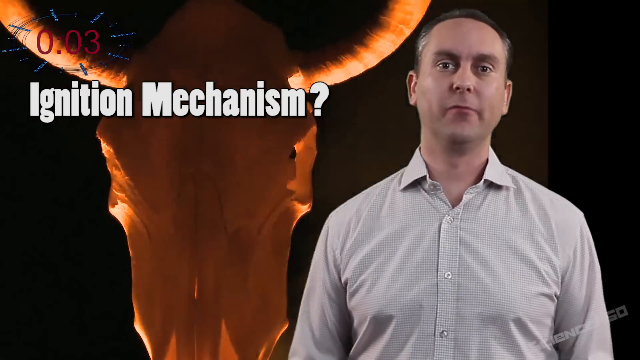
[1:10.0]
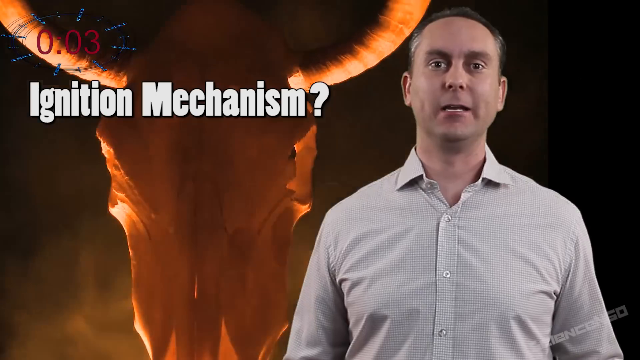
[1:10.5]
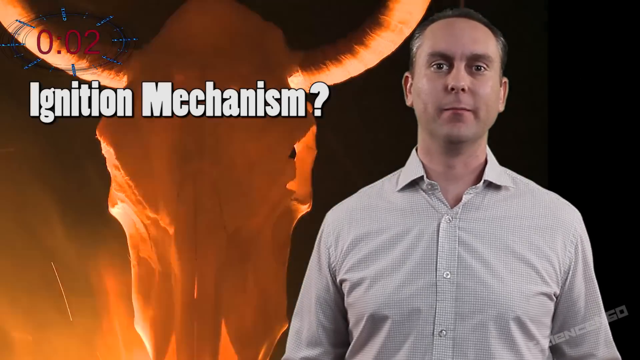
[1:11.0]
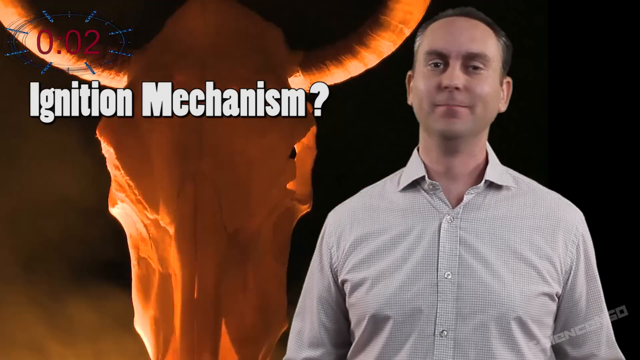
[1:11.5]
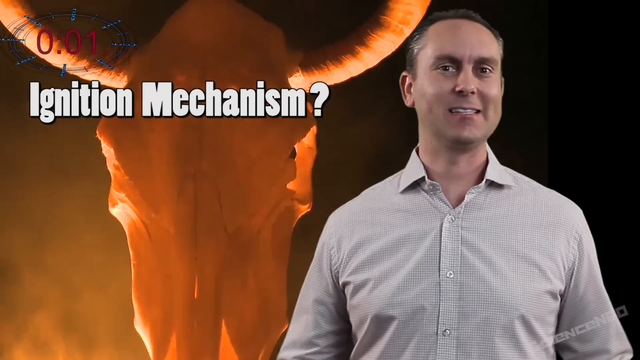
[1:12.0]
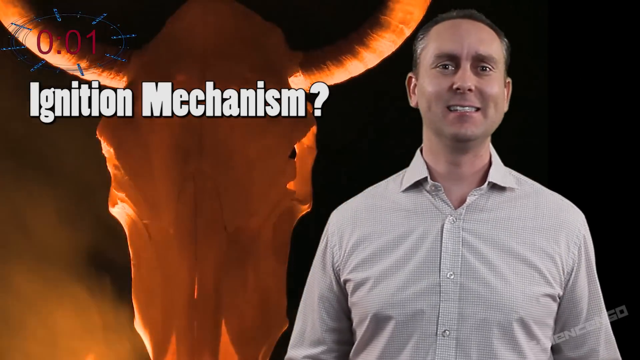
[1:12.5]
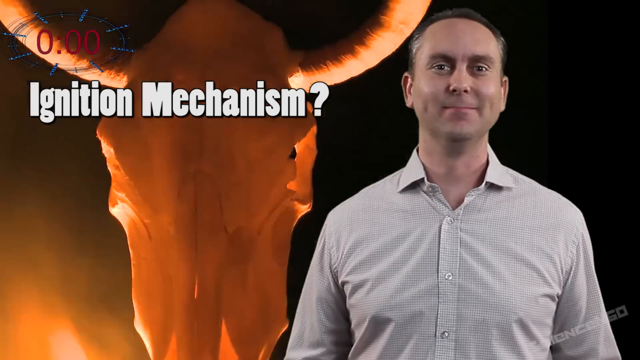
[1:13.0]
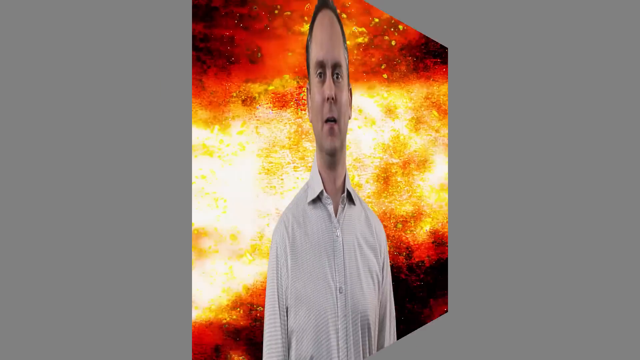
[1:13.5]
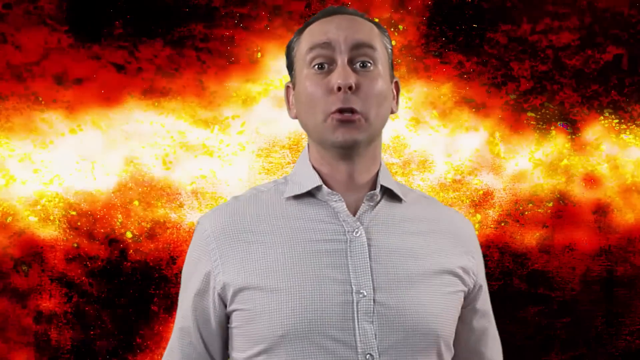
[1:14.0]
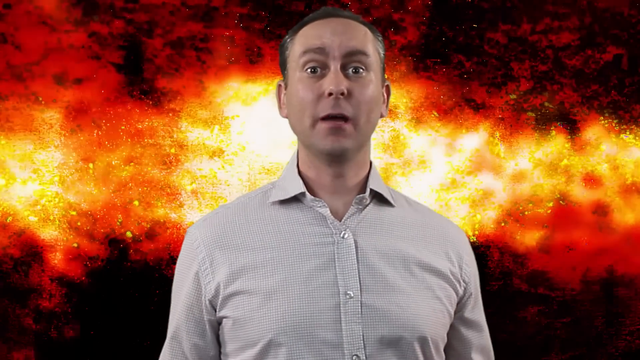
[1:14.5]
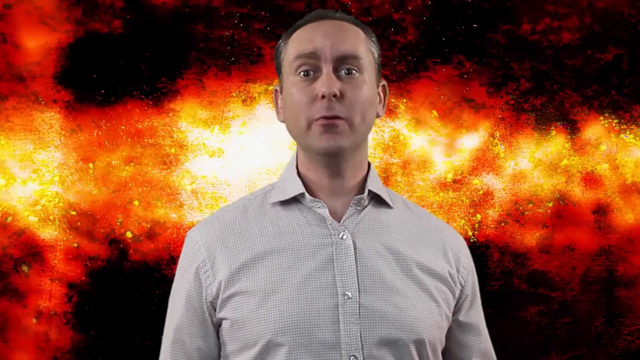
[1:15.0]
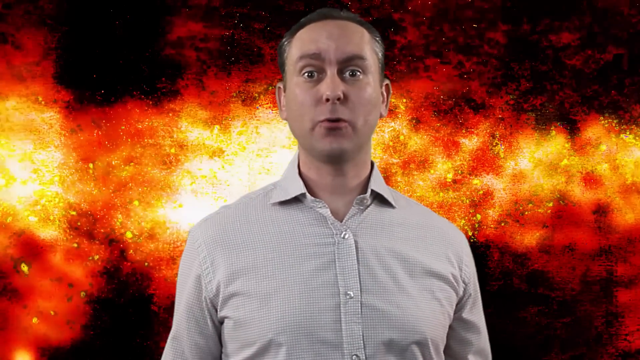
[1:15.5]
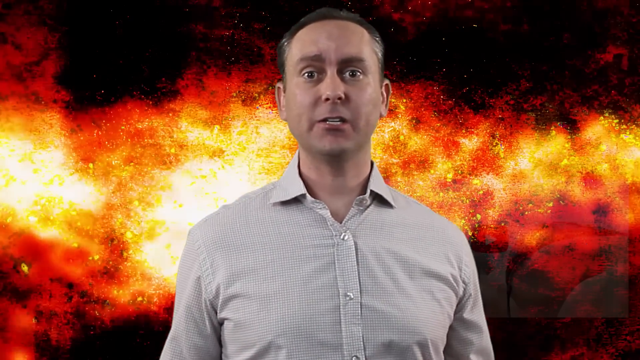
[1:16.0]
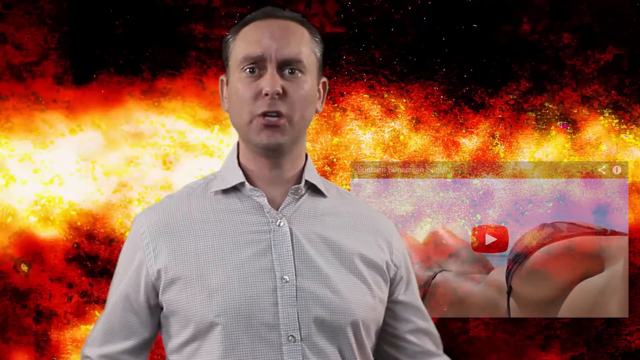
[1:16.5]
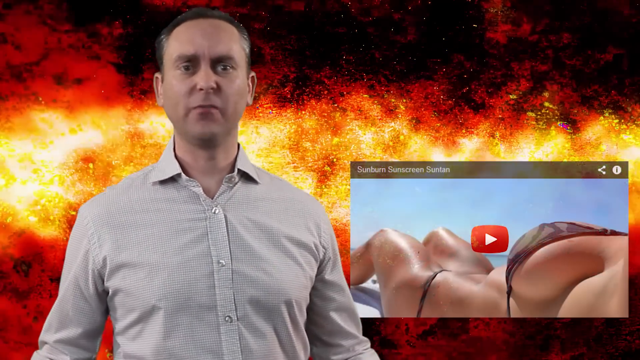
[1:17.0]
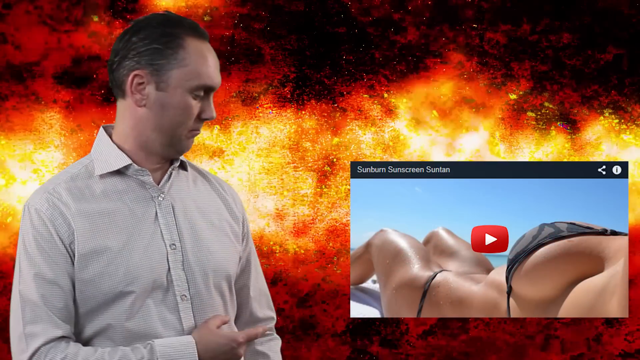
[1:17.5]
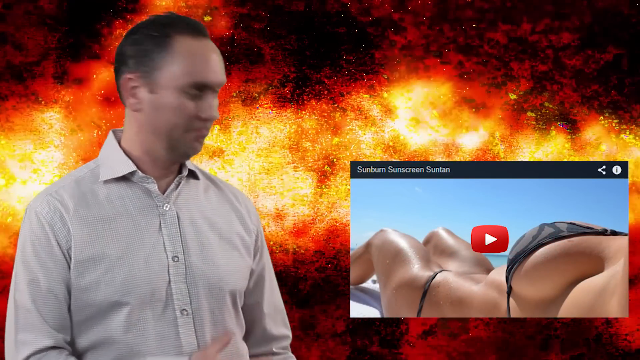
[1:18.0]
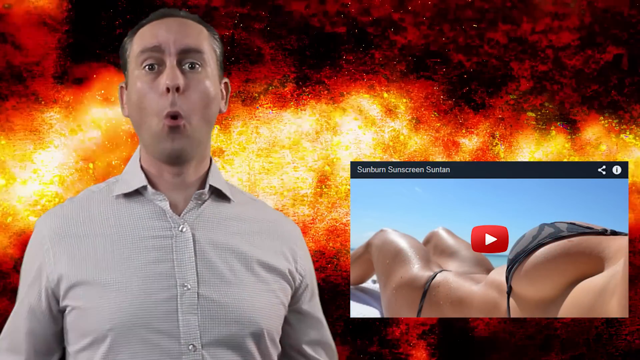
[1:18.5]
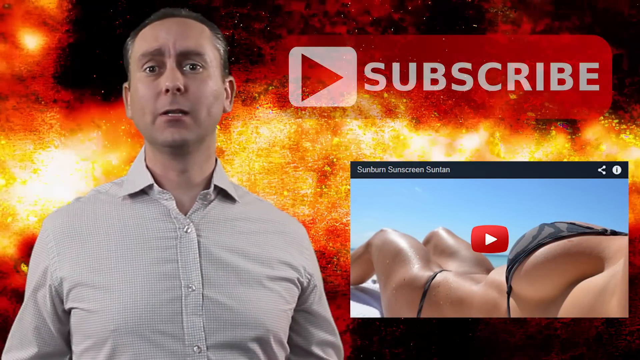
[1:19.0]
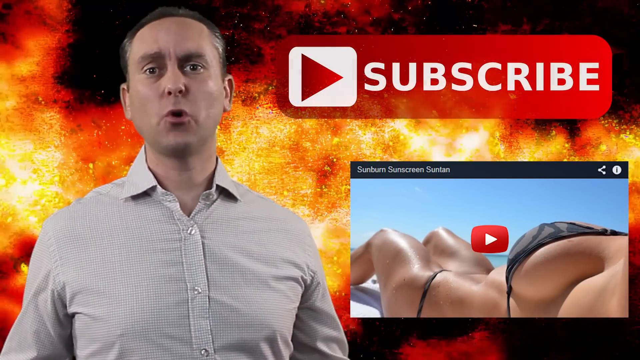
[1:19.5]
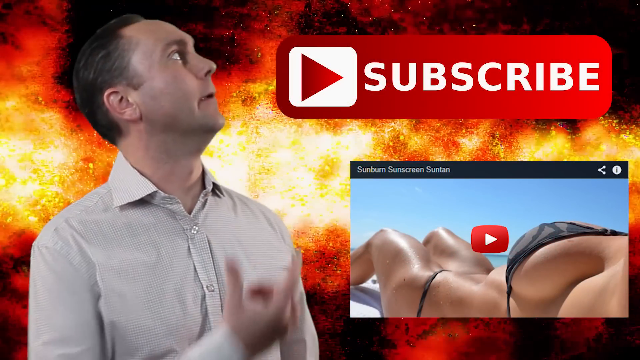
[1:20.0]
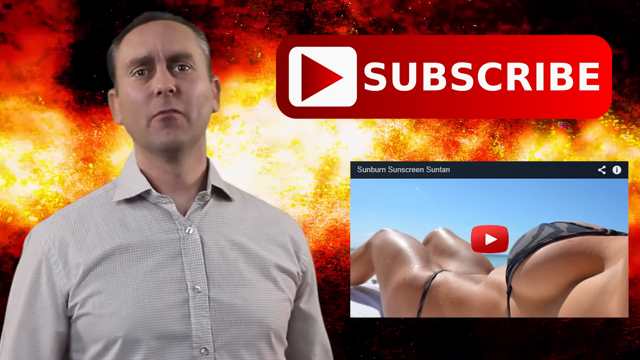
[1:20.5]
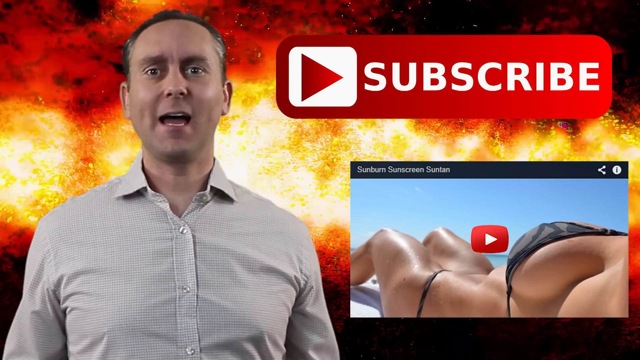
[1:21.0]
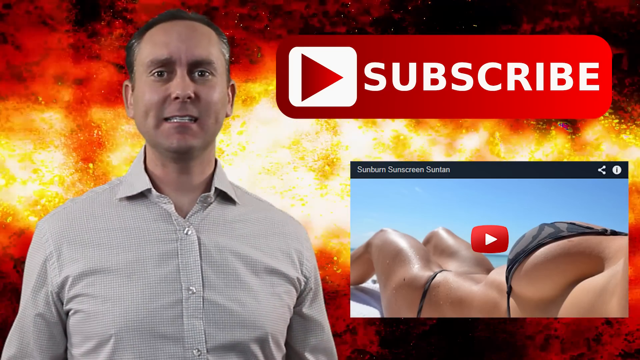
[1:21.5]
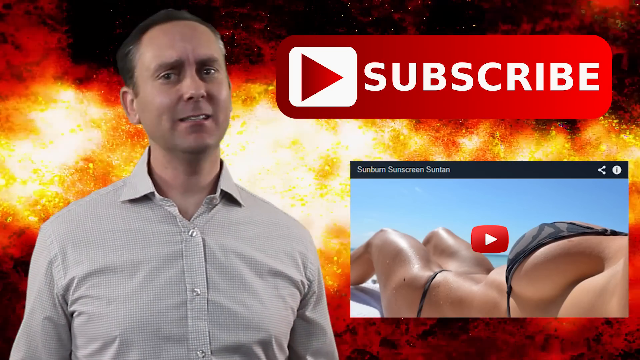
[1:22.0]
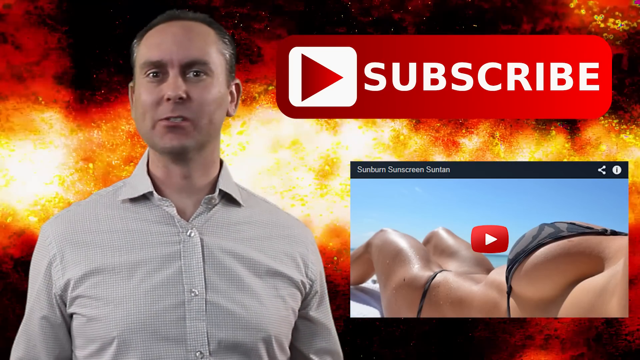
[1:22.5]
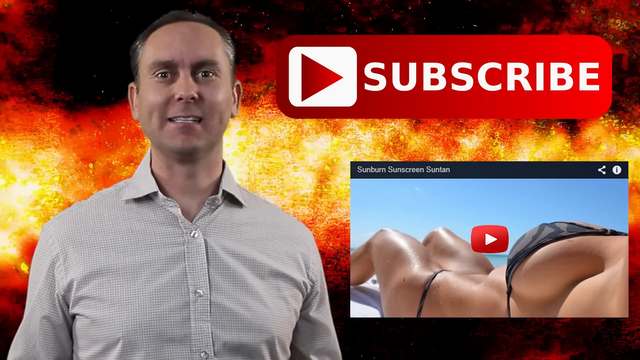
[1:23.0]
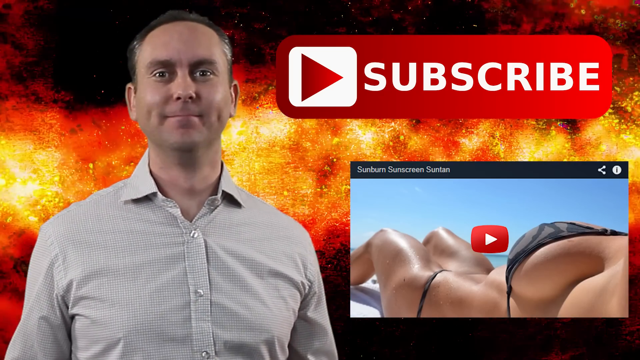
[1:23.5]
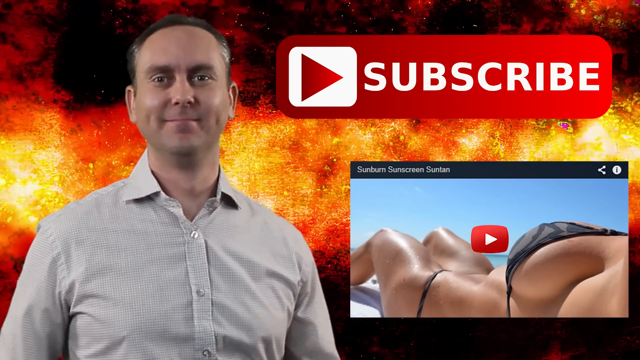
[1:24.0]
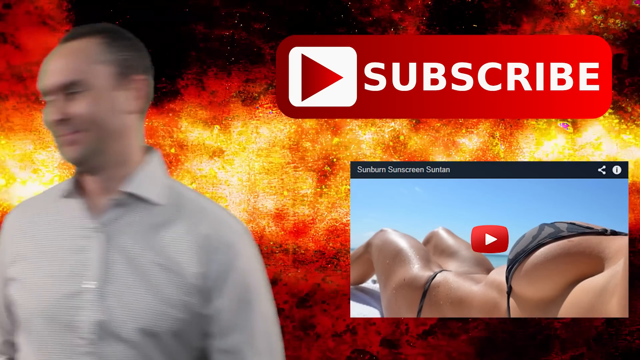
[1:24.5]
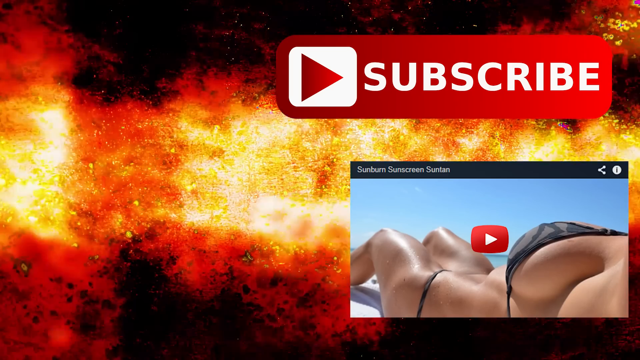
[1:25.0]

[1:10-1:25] The narrator is still talking as the scene opens on him, with the text "ignition mechanism," what looks like a cow in the background, and flames in the background. Then, with flames in the background, the text "subscribe" appears, followed by an image of a woman, seen from the neck down, lying on a beach in a bikini. The man is shown talking as he finishes the ignition mechanism segment, and a question mark appears, along with what looks like a cow head. The man smiles and walks off the set after finishing.